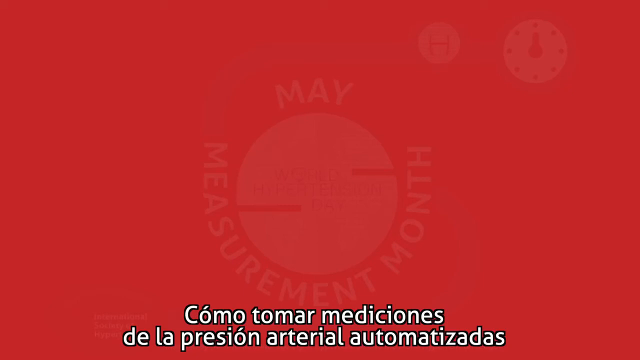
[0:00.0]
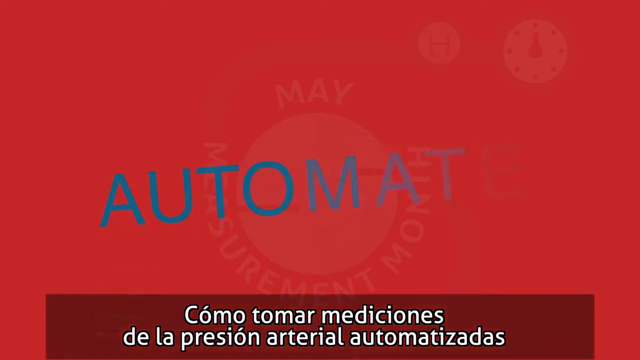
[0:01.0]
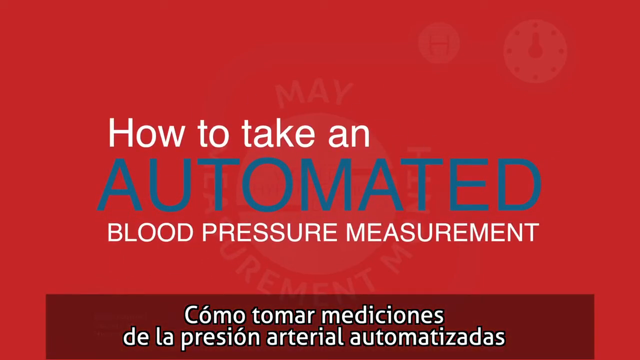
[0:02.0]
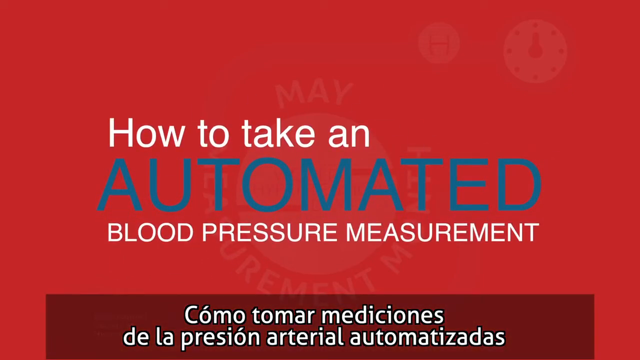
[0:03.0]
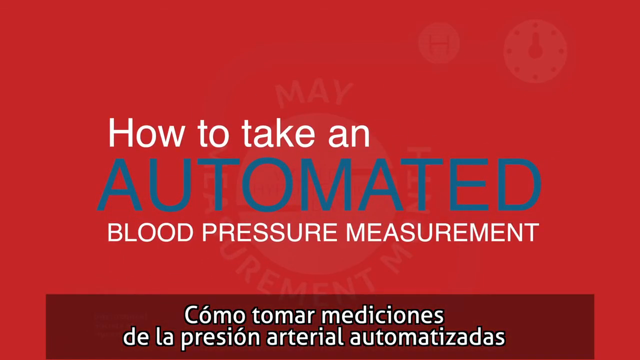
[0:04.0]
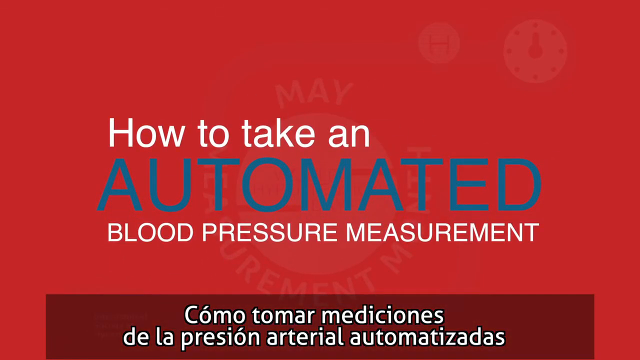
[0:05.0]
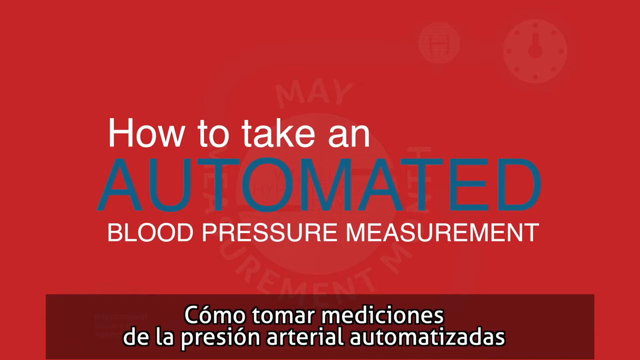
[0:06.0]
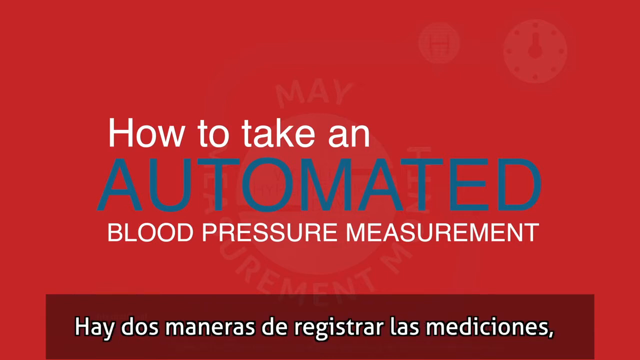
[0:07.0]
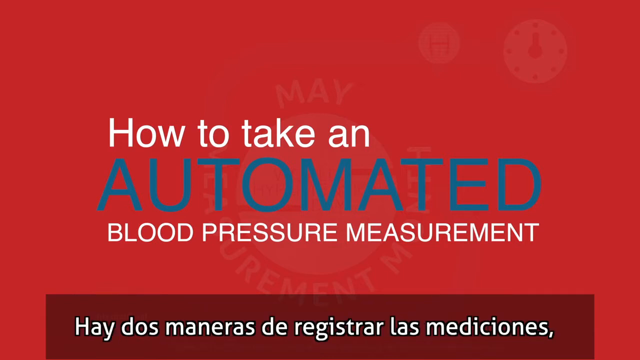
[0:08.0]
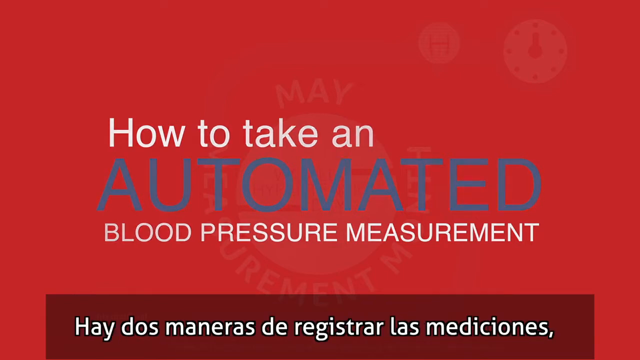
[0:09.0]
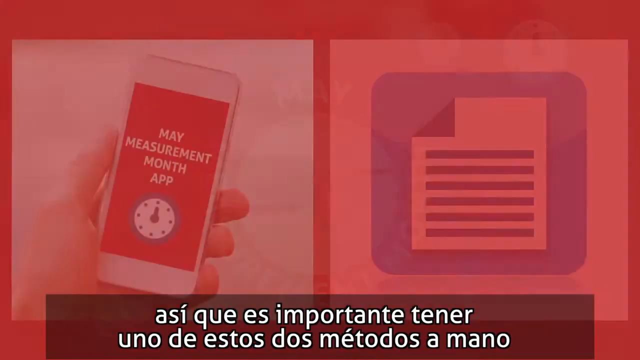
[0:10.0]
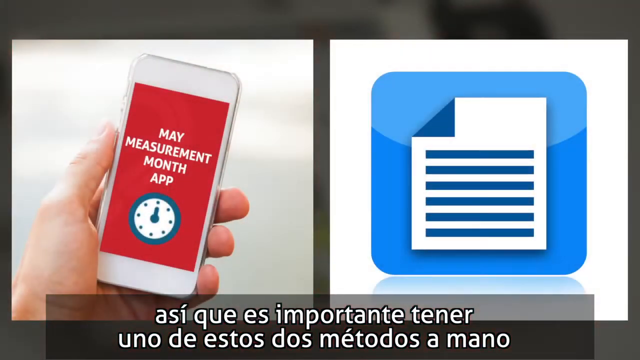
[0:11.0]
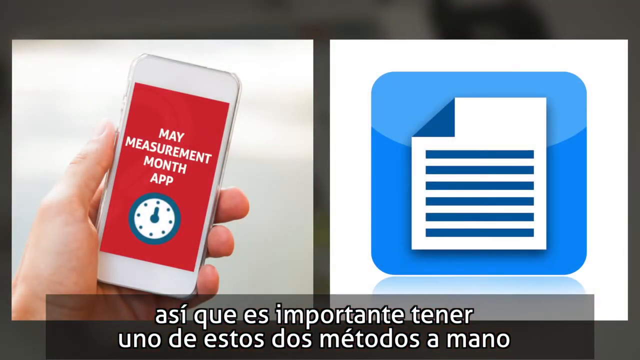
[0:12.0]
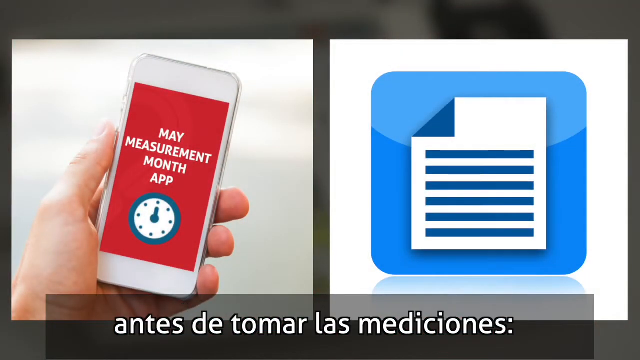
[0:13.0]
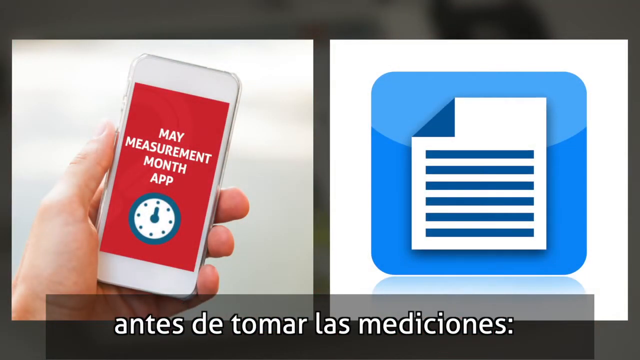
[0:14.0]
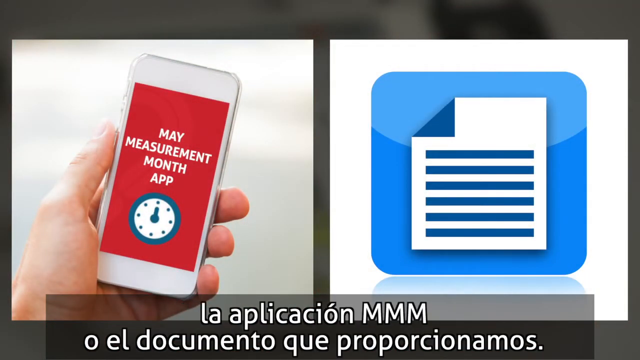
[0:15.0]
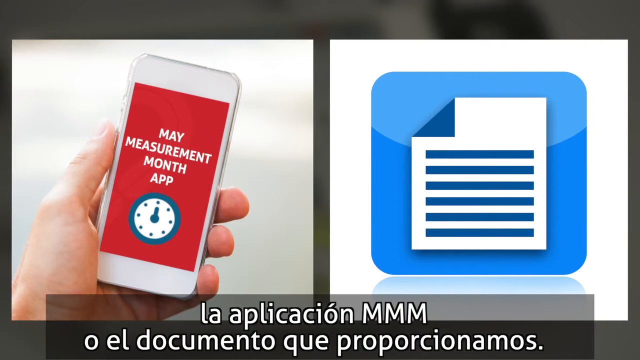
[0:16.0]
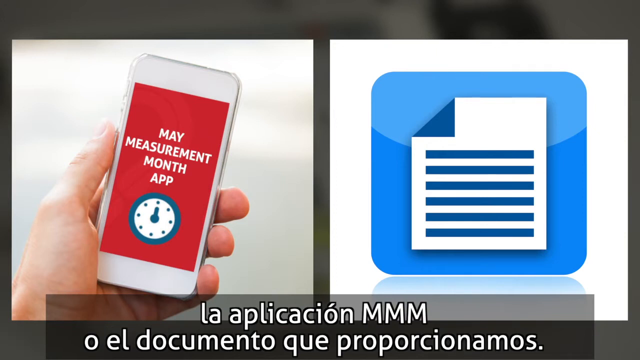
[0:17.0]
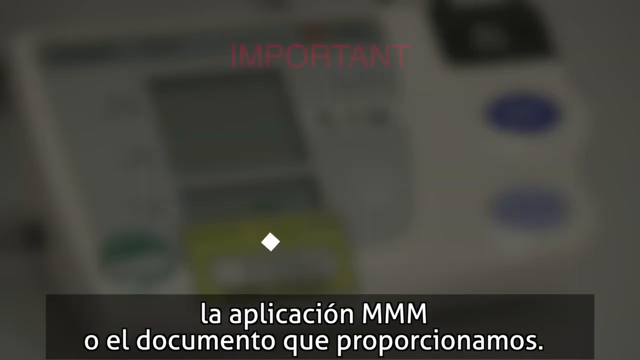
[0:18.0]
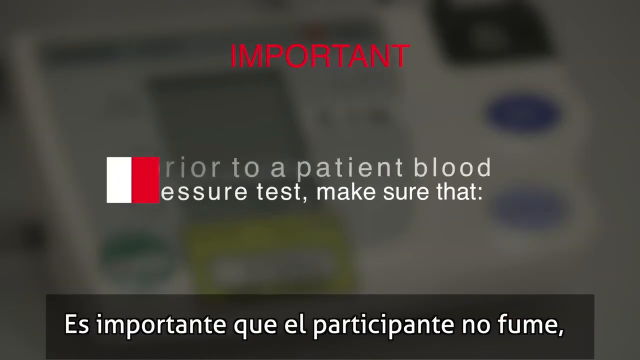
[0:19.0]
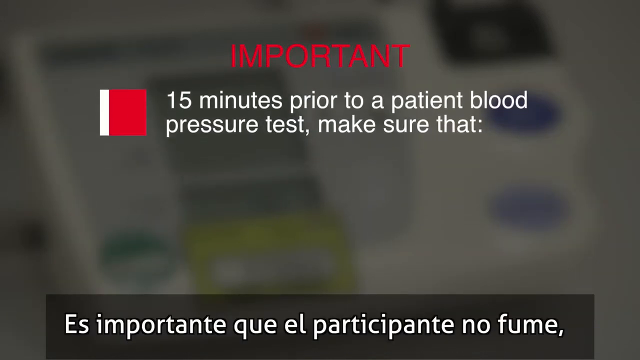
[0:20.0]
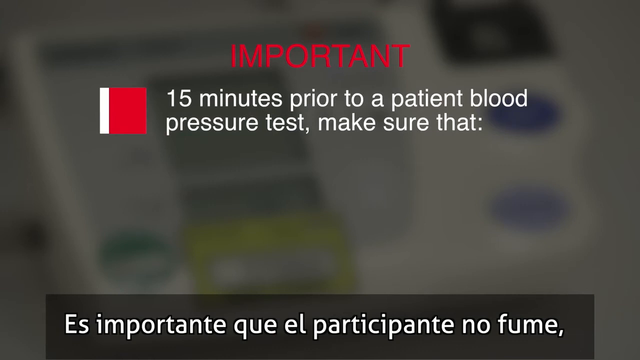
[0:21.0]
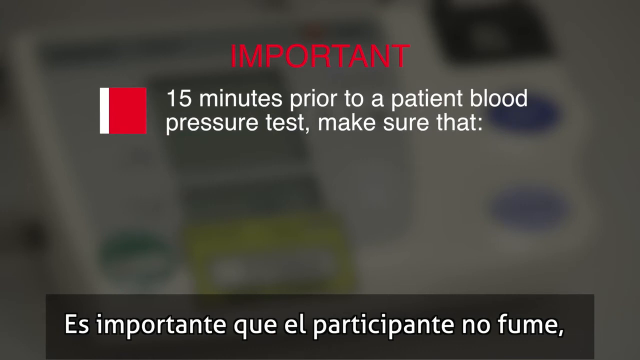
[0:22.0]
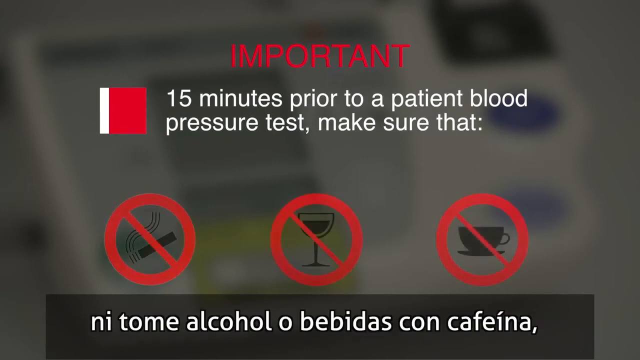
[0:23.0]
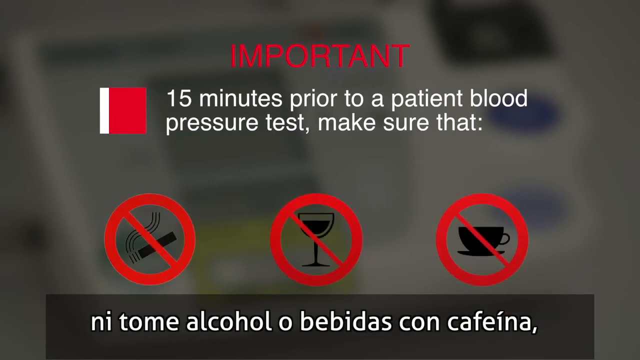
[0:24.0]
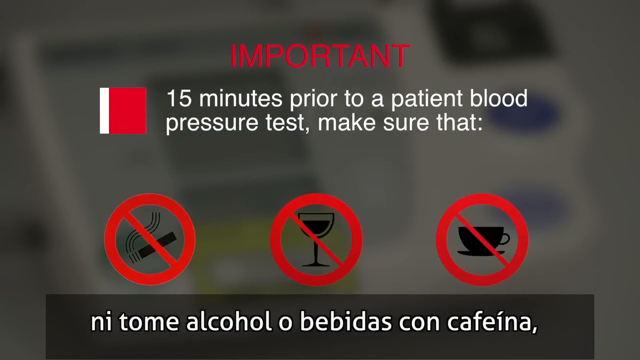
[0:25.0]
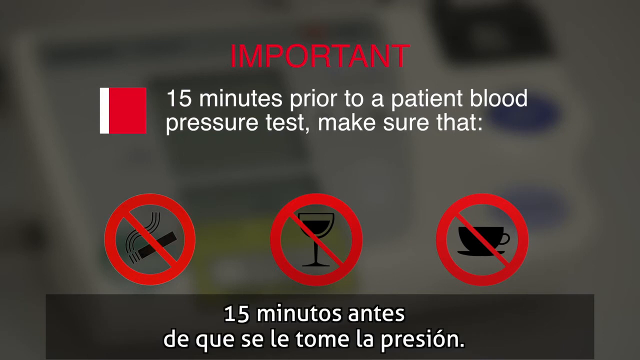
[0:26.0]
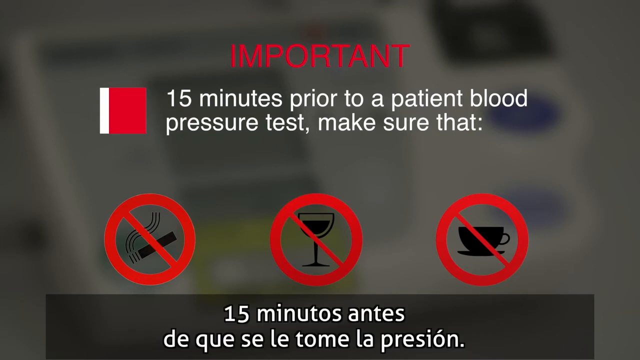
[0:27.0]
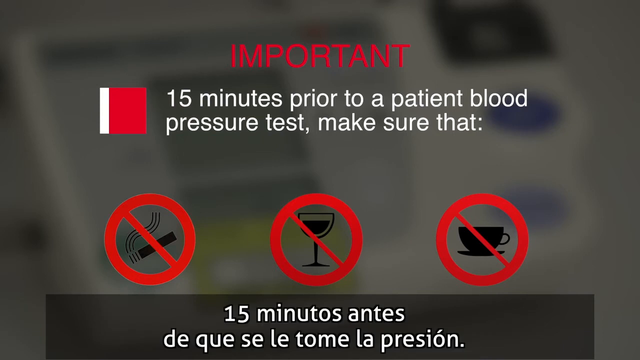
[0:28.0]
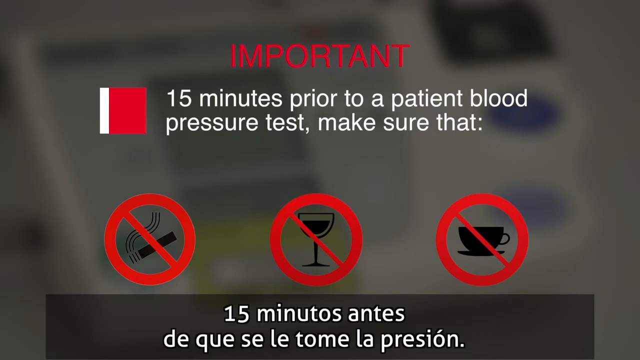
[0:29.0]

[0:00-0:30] Spanish captions appear on screen, along with the words "May measurement month," which are set in what is kind of a red circle in the background, and a clock. Next, white and gray text reads "how to take an automated blood pressure measurement." Two pictures then appear on the screen: on the left, someone holds a phone showing a clock and the words "my measurement month app," and on the right there is a document. Text then reads "important" and "15 minutes prior to a patient's blood pressure test make sure that," followed not by words but by pictures: a cigarette with a circle and slash over it, a wine glass with a circle and slash over it, and a cup of coffee with a circle and slash over it.